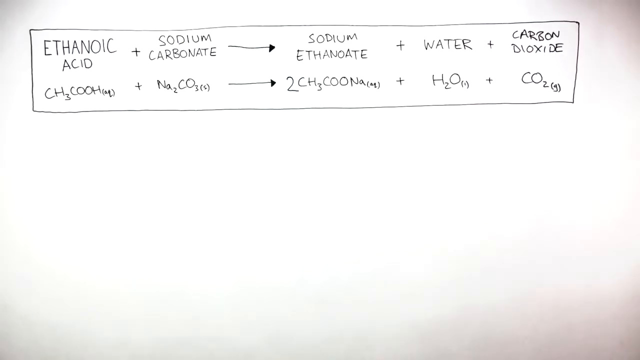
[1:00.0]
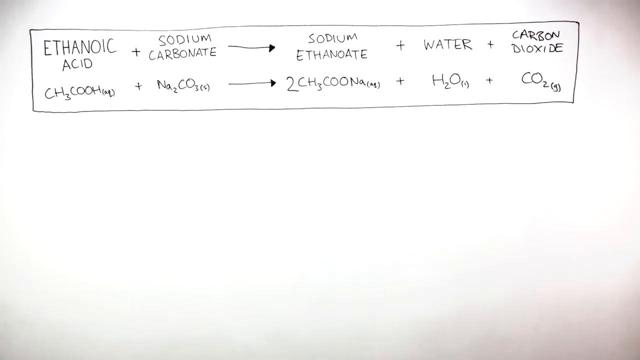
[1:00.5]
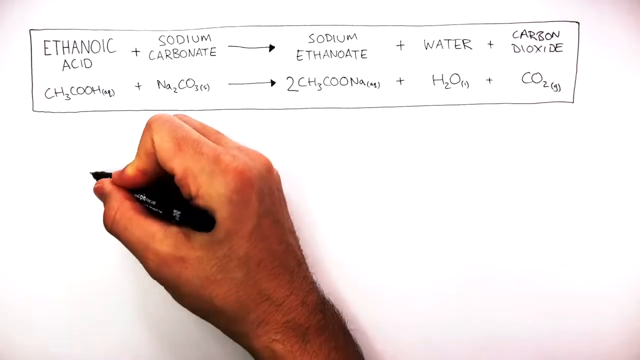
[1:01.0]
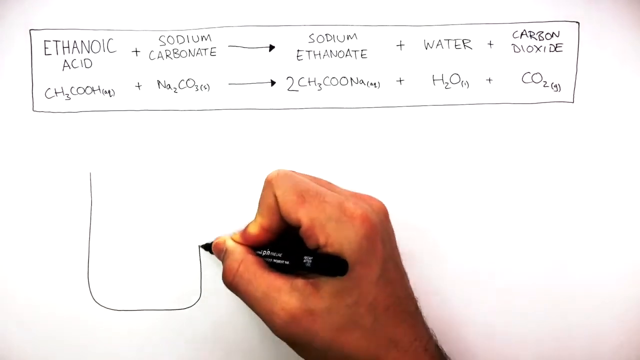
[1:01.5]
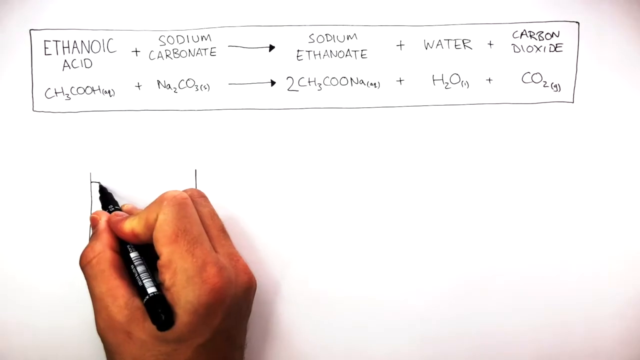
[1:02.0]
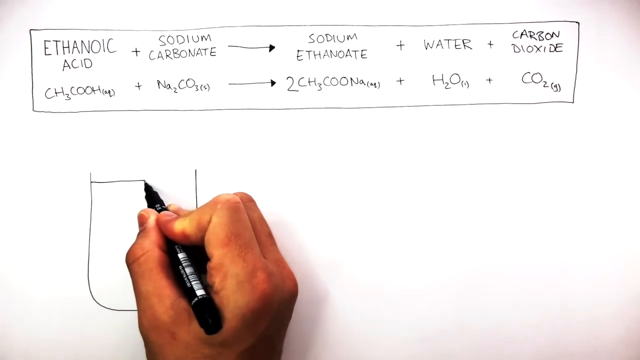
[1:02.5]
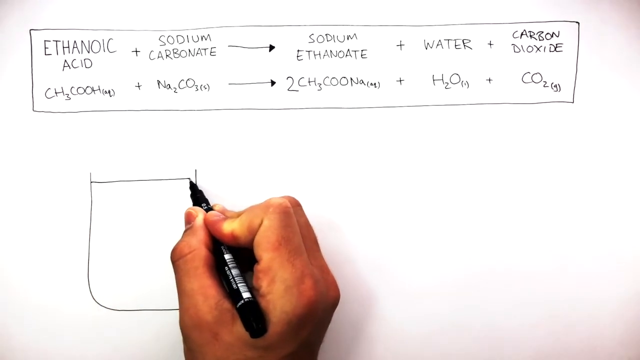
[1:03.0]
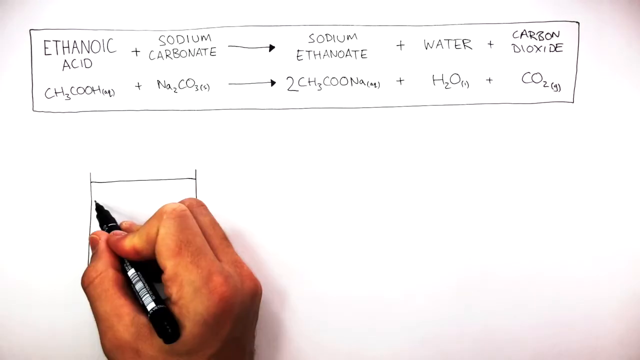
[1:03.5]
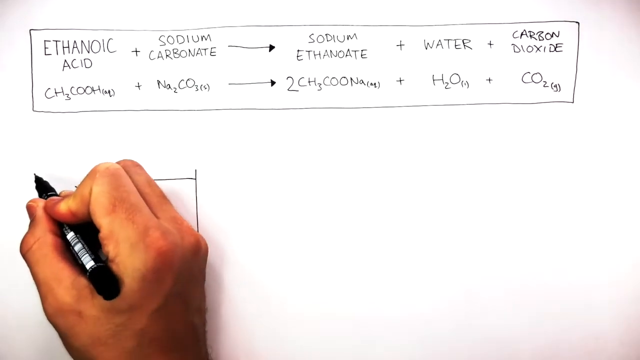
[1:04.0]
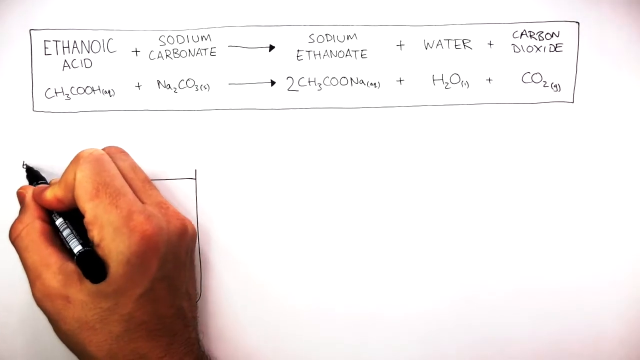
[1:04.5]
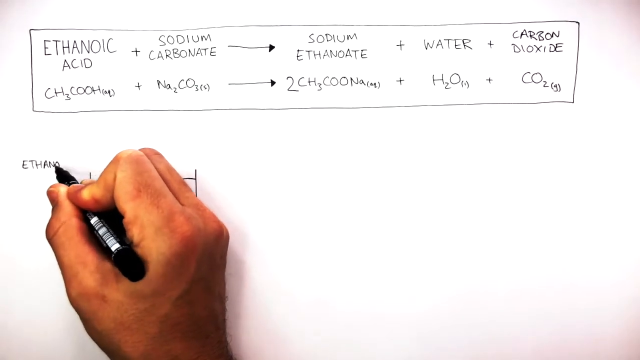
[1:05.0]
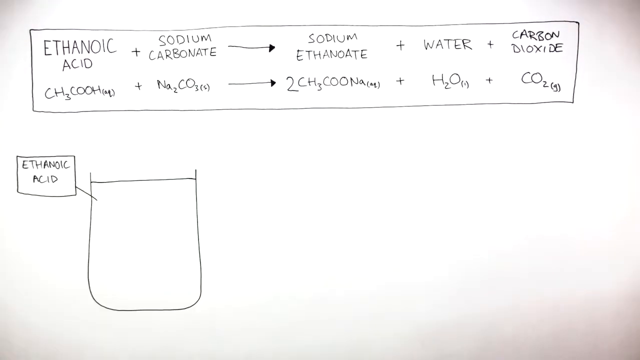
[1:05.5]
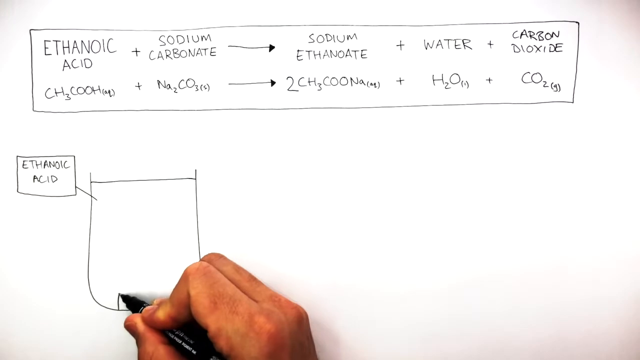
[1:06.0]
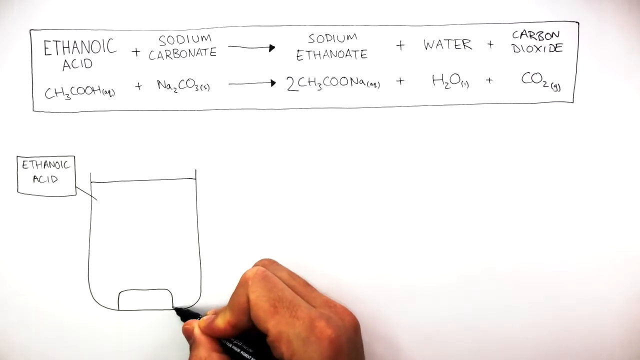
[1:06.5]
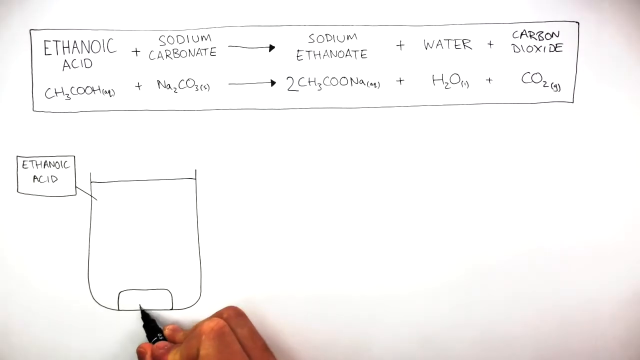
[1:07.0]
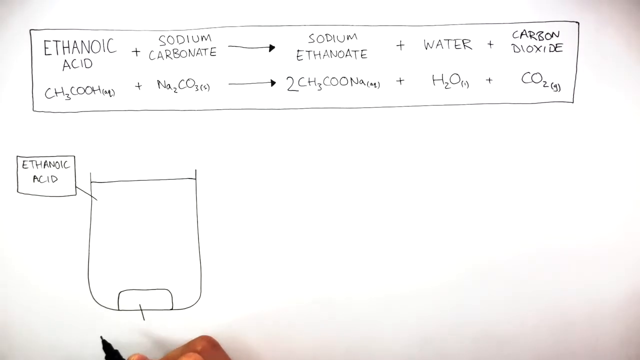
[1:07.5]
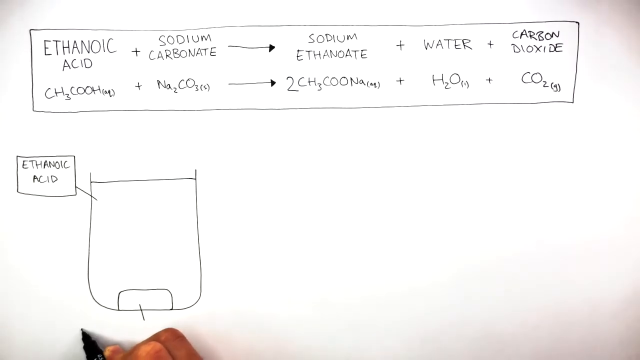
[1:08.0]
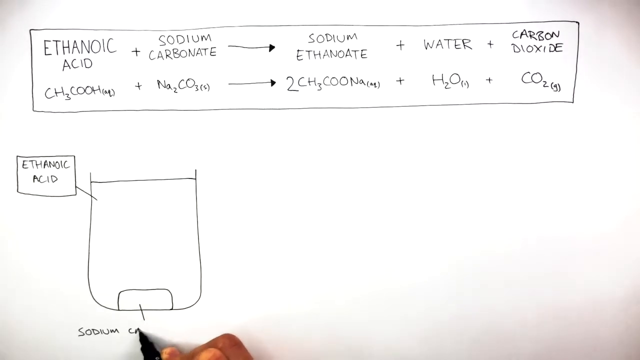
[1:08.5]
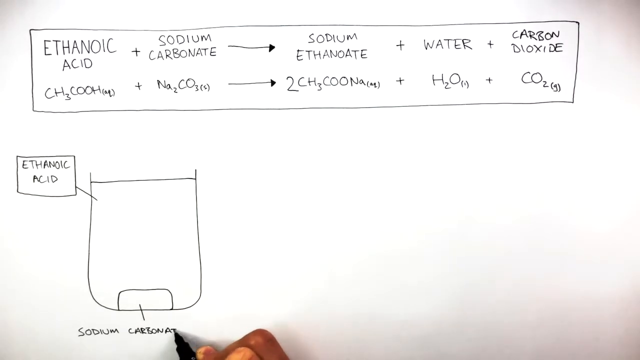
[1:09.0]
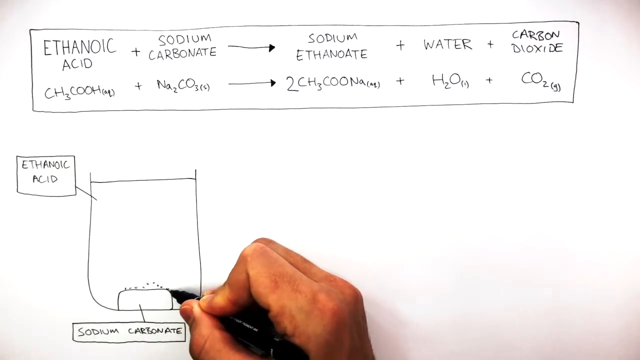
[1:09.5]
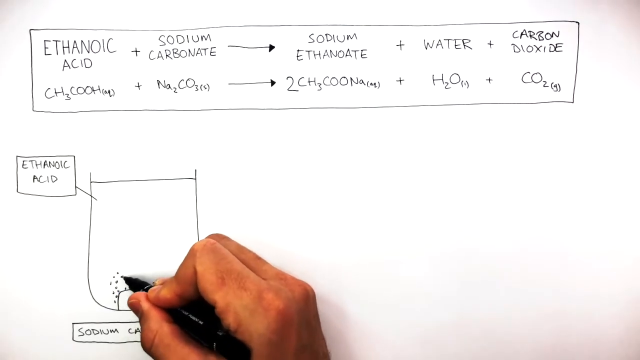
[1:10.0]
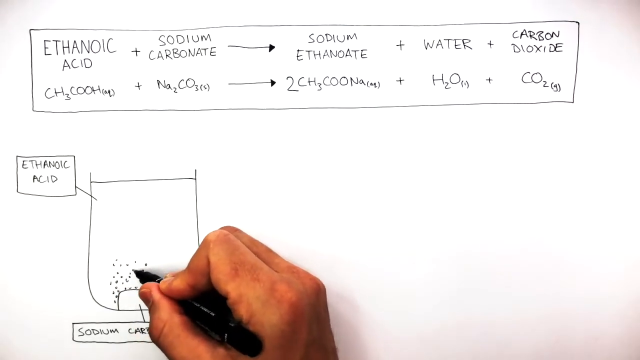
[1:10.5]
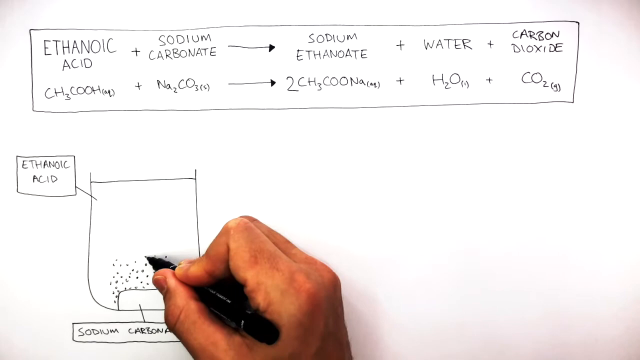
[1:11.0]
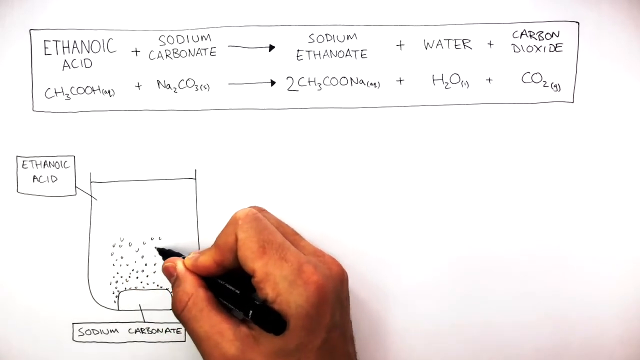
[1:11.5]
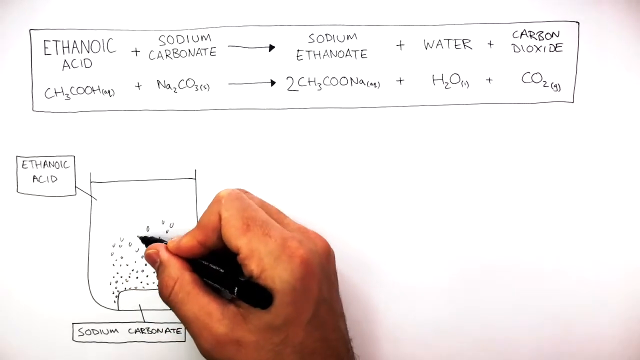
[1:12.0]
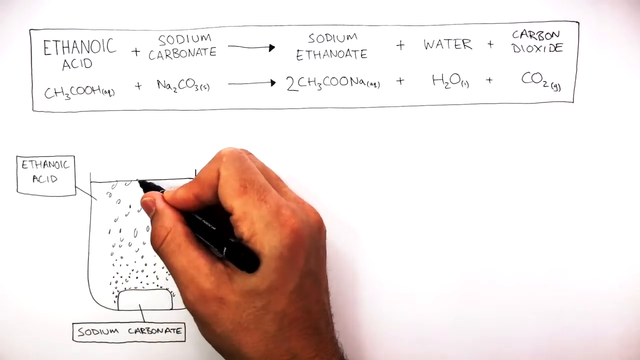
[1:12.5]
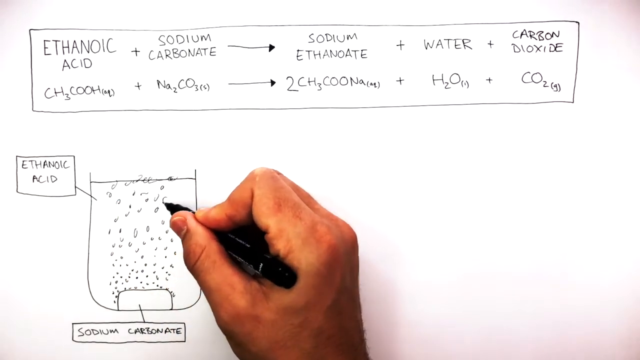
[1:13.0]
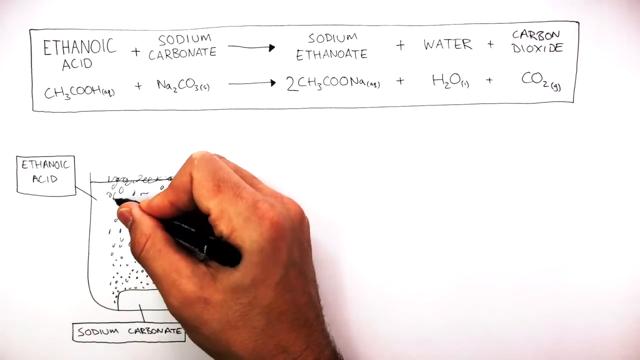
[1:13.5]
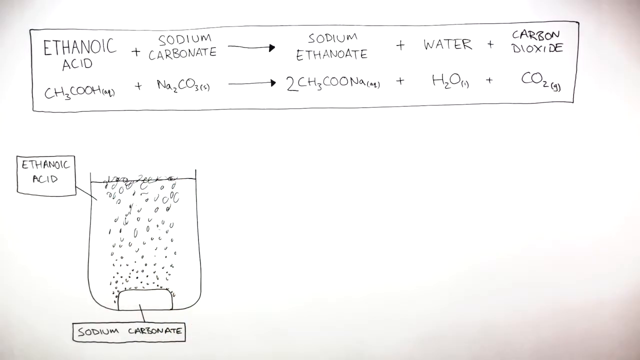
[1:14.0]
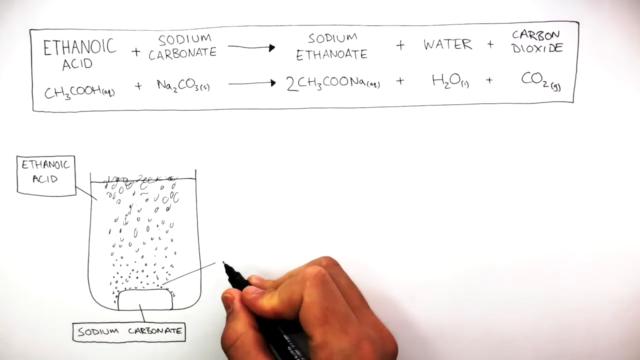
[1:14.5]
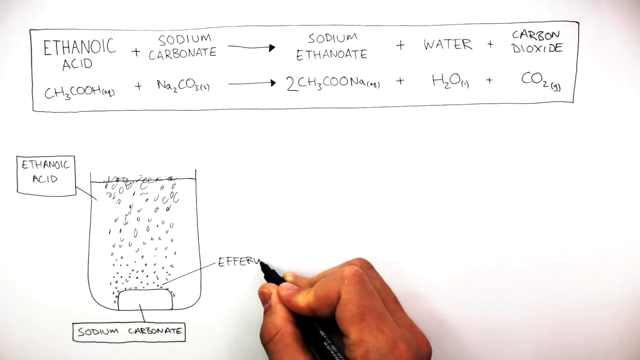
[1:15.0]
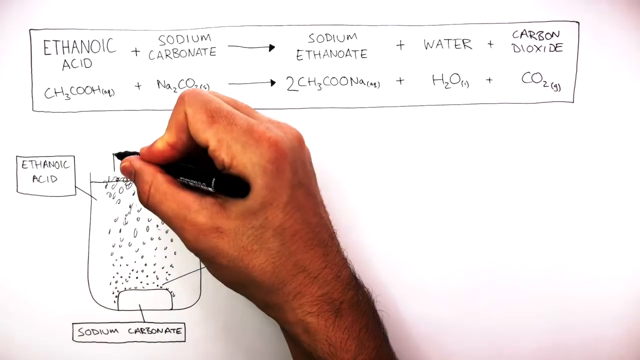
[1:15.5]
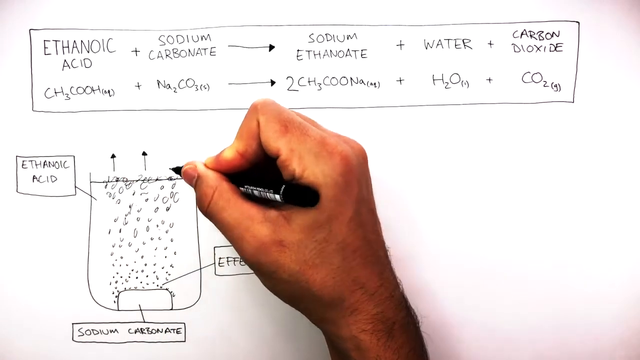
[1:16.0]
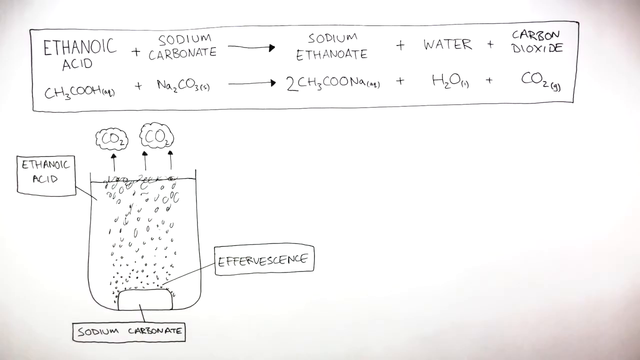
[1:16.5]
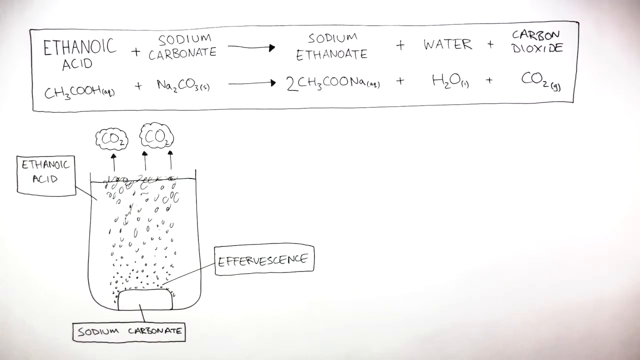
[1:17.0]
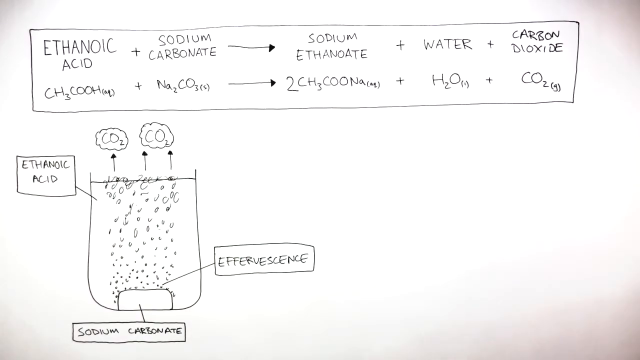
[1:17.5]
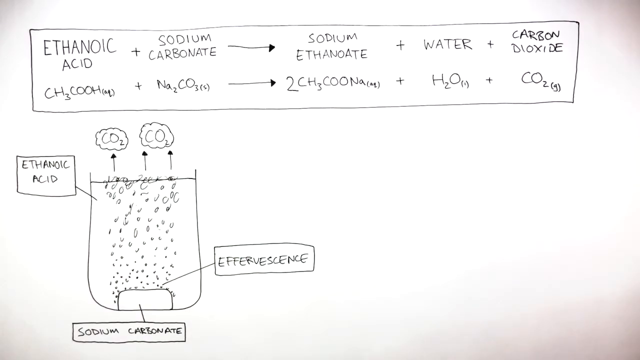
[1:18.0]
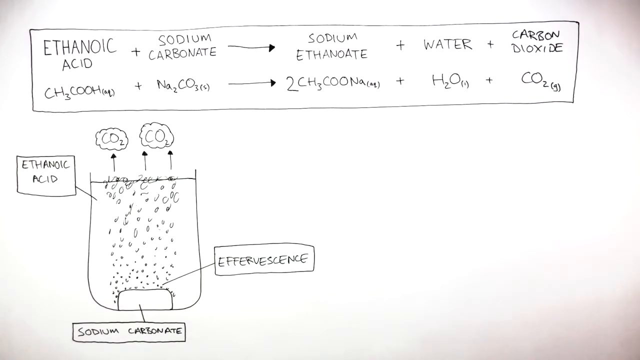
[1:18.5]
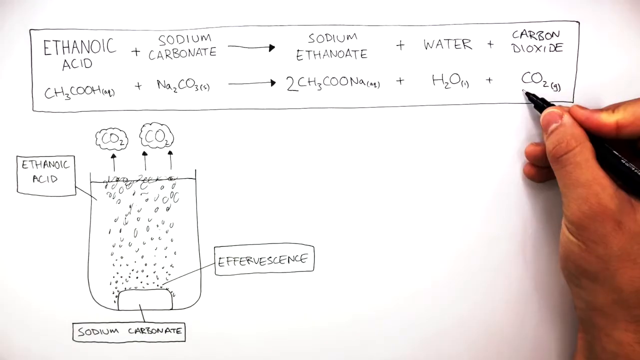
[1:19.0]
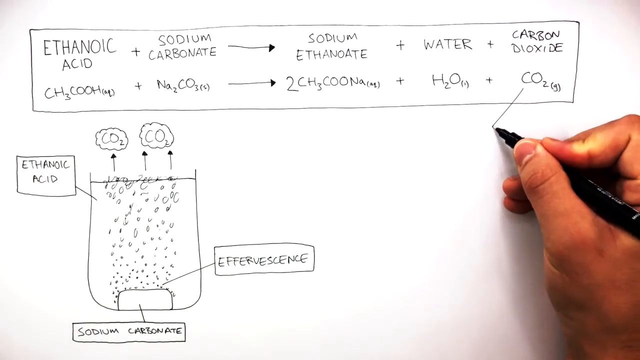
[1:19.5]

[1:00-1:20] A person's right hand holding a black pen draws a beaker, with the label ethanoic acid pointing into the solution part of the beaker. He then draws a sodium carbonate tablet in pencil and makes little circles above the tablet in the beaker to indicate that it is effervescing and releasing CO2. Labels are attached to the drawing: the sodium carbonate tablet is labeled, the ethanoic acid is shown dissolved in the water, the CO2 gas is drawn as small cartoonish clouds escaping the solution, and the effervescence is indicated by dots and circles rising from the tablet. The person then draws a line from the CO2 part of the chemical reaction equation, pulling it toward the drawing in the bottom left-hand corner of the screen.